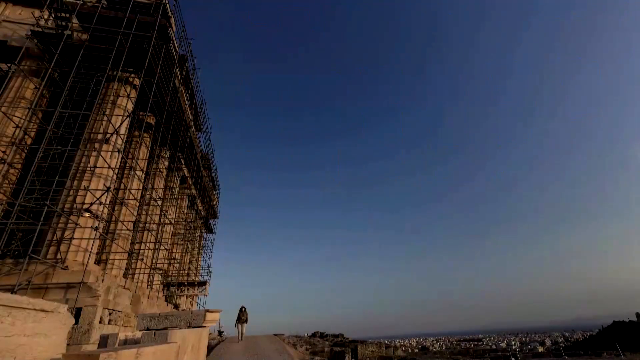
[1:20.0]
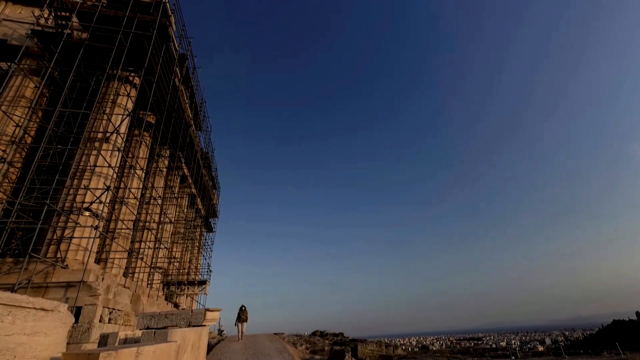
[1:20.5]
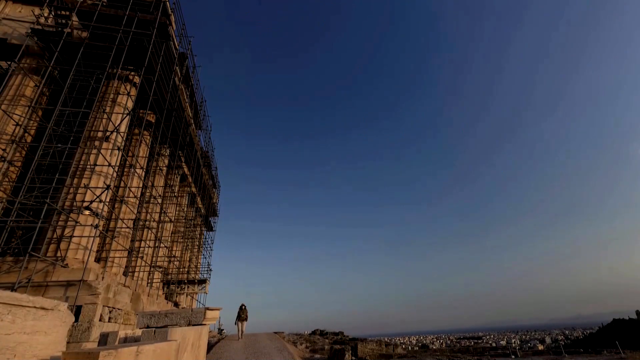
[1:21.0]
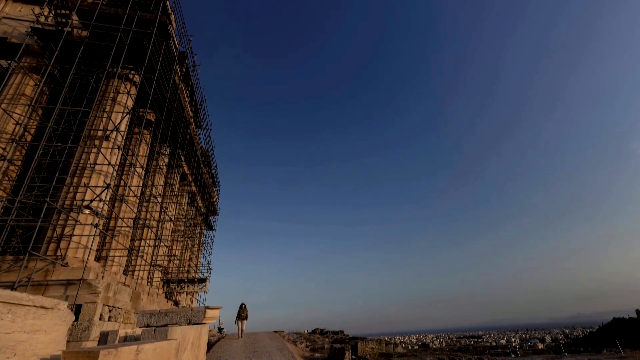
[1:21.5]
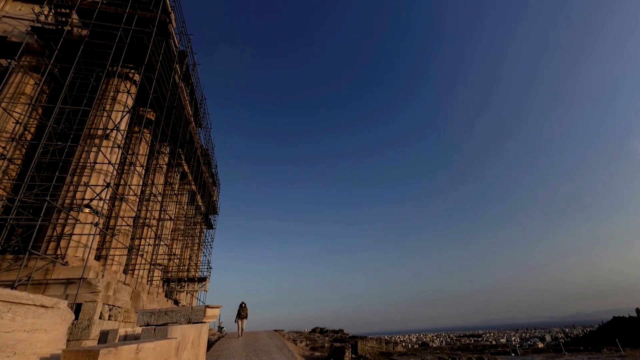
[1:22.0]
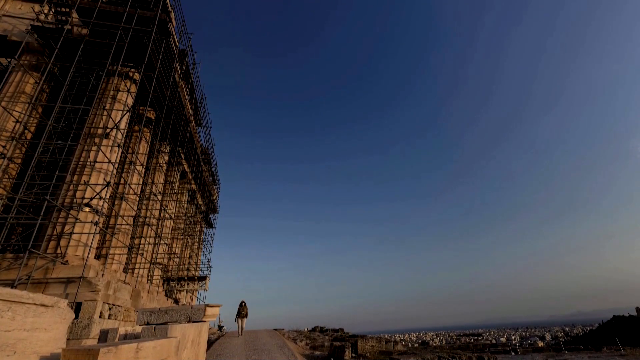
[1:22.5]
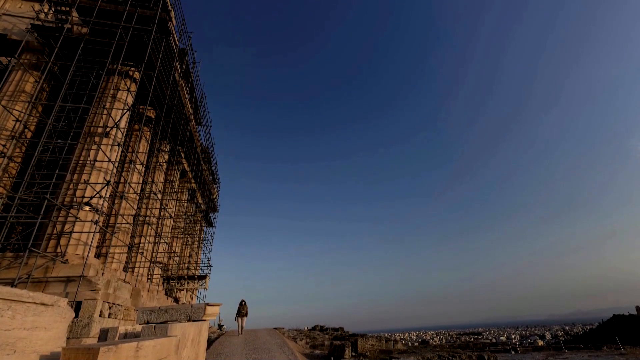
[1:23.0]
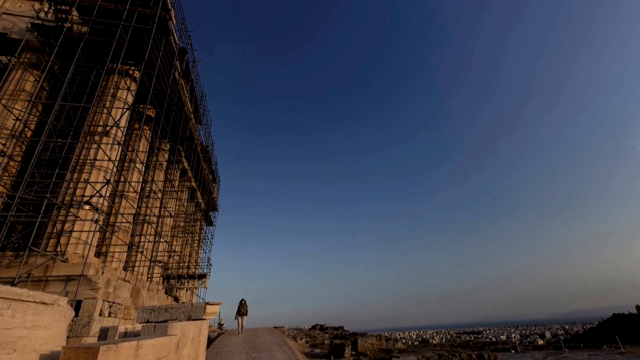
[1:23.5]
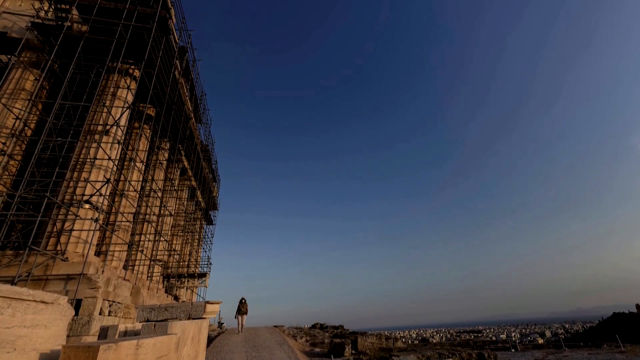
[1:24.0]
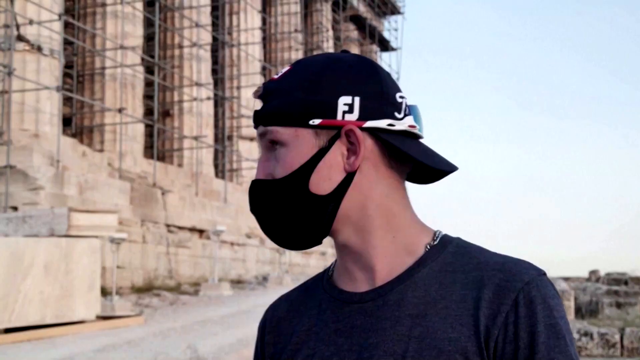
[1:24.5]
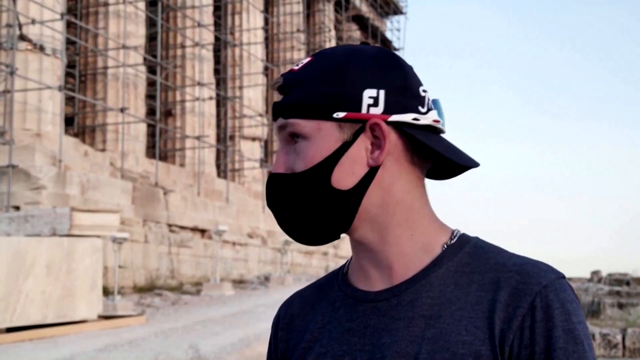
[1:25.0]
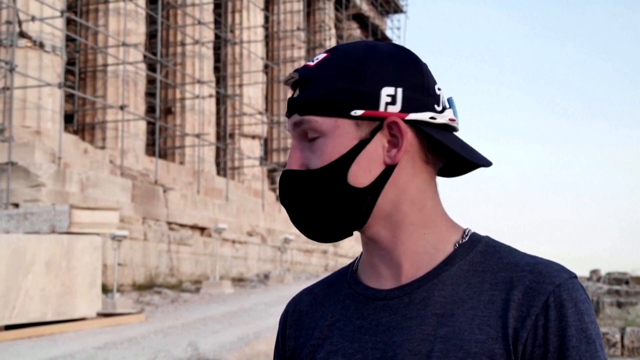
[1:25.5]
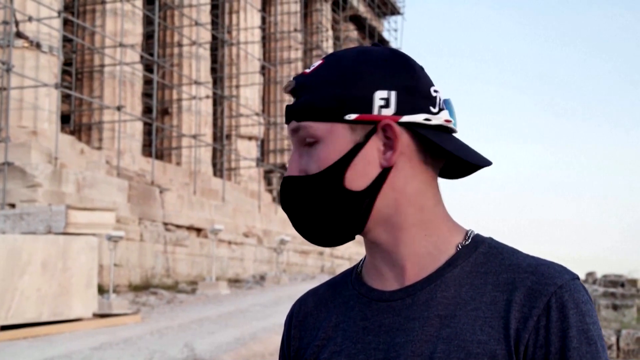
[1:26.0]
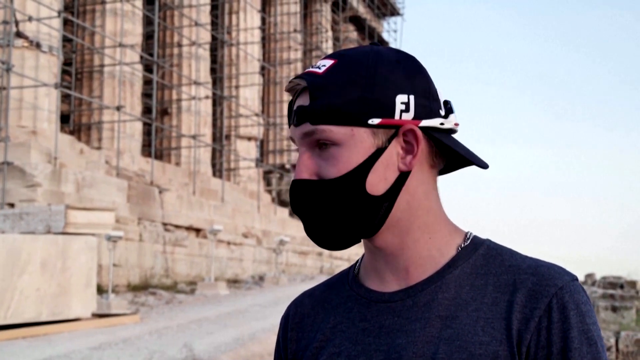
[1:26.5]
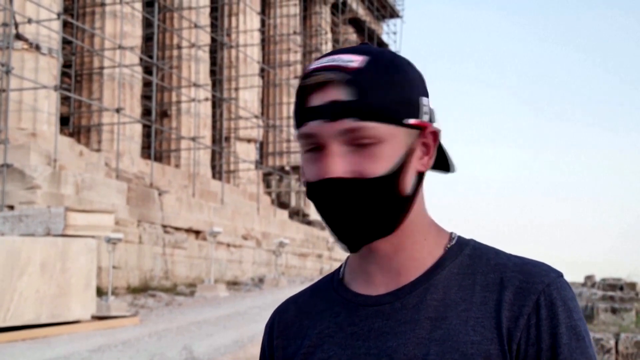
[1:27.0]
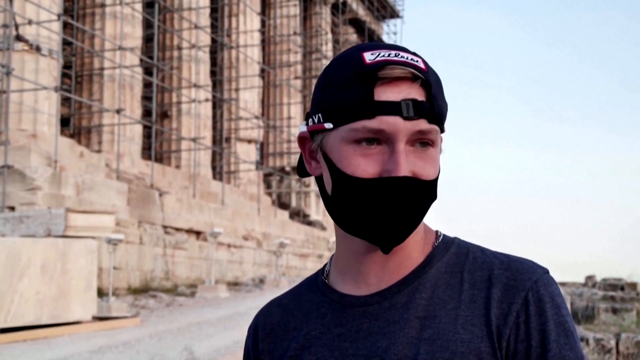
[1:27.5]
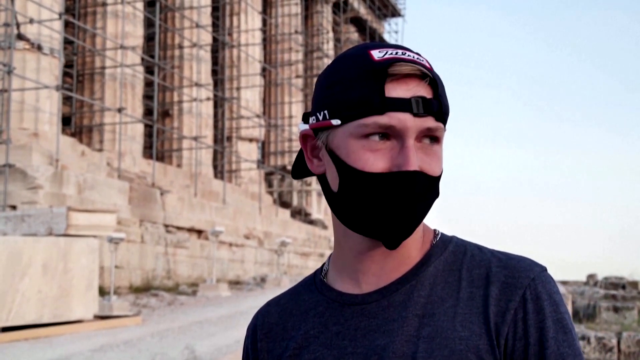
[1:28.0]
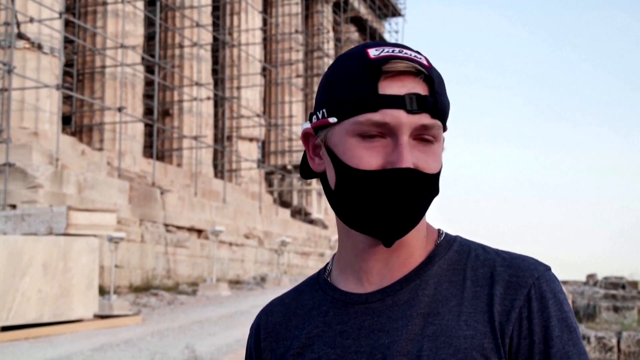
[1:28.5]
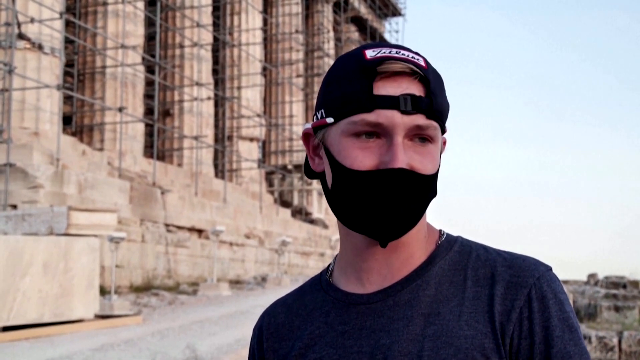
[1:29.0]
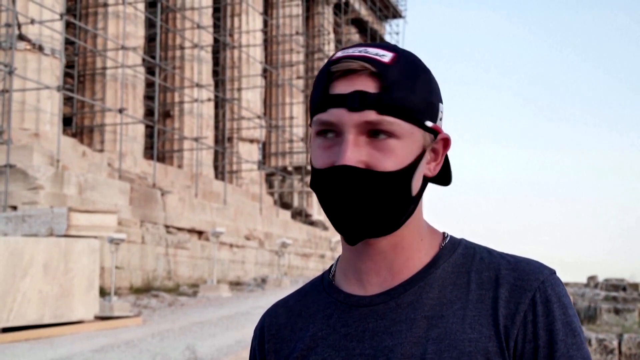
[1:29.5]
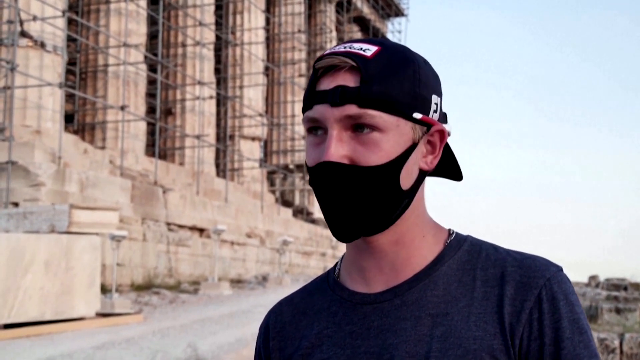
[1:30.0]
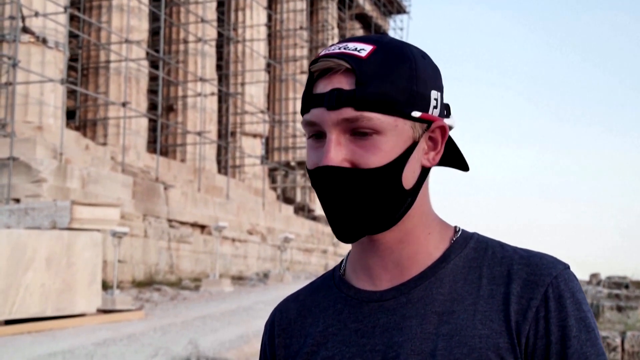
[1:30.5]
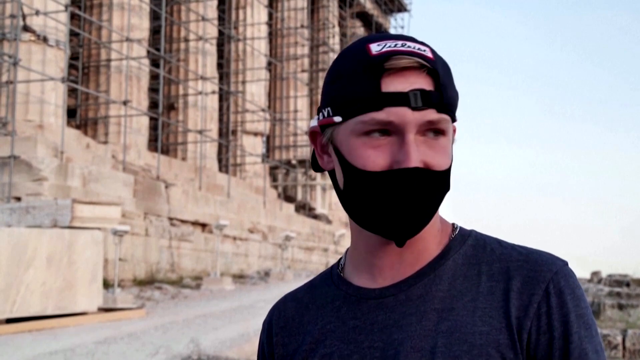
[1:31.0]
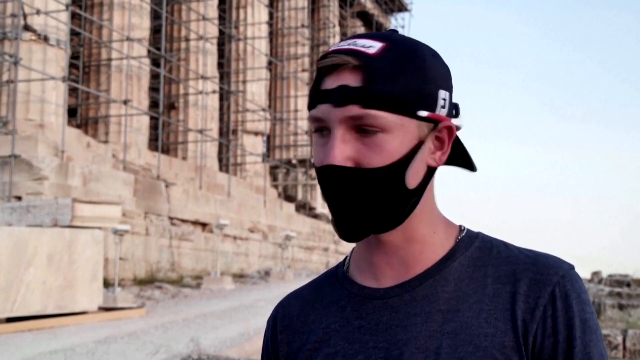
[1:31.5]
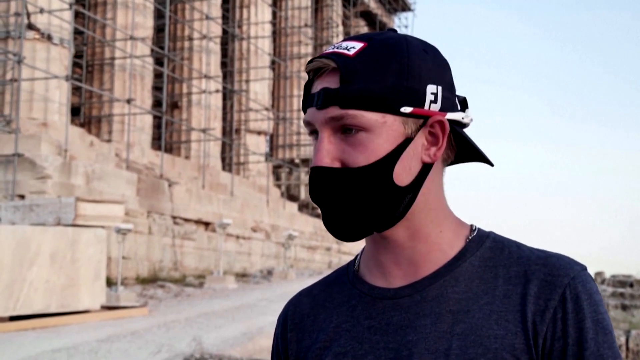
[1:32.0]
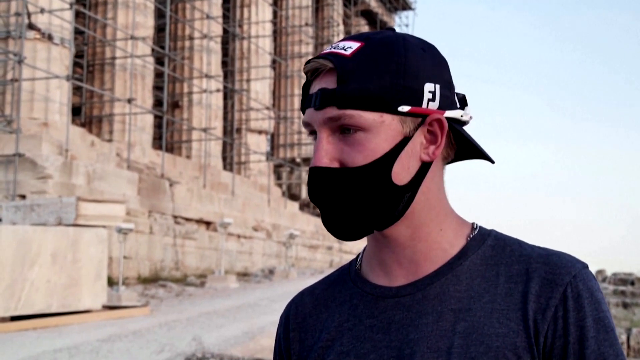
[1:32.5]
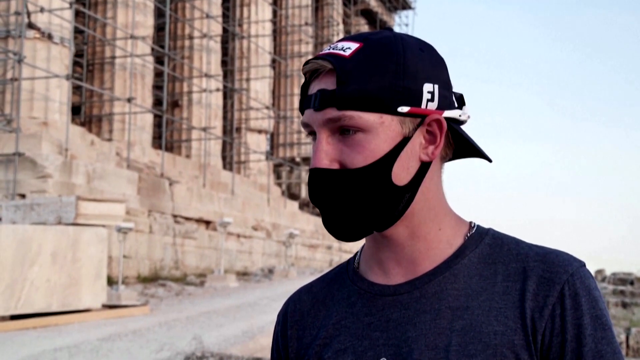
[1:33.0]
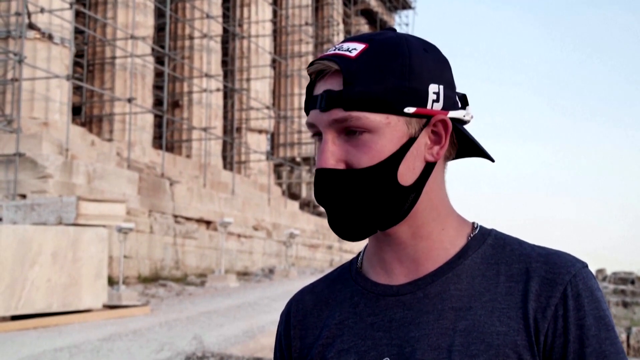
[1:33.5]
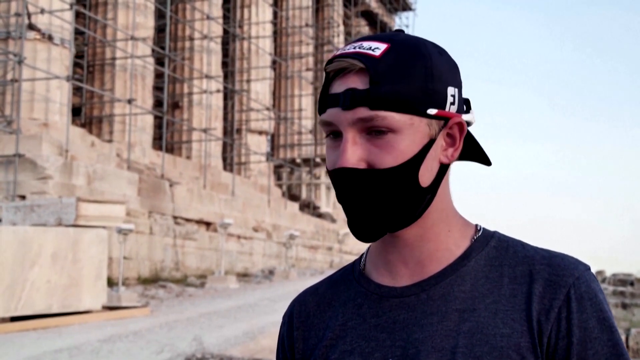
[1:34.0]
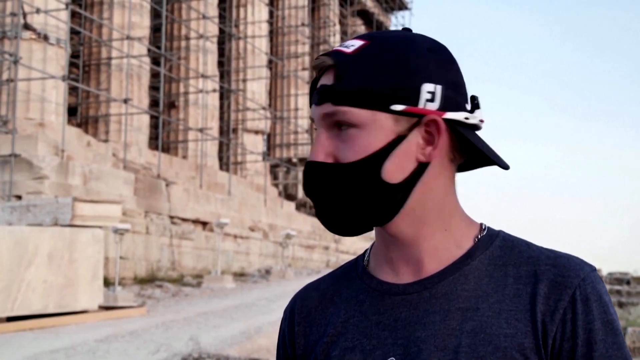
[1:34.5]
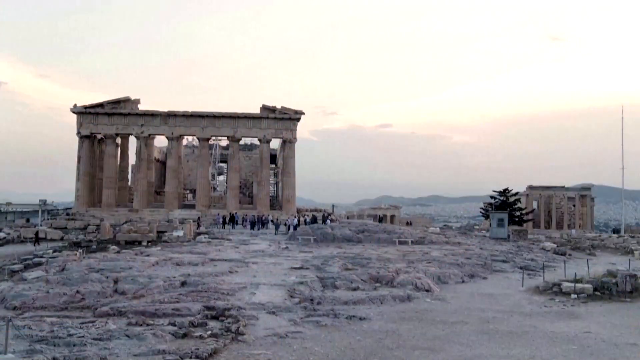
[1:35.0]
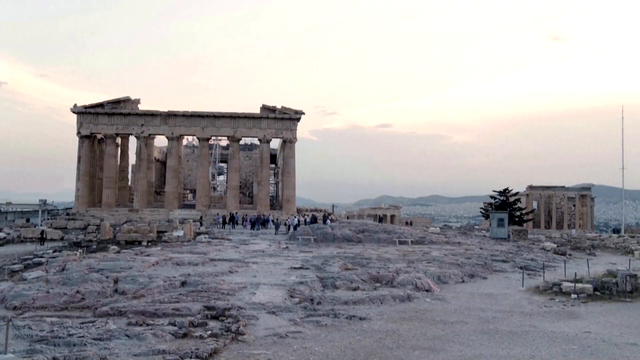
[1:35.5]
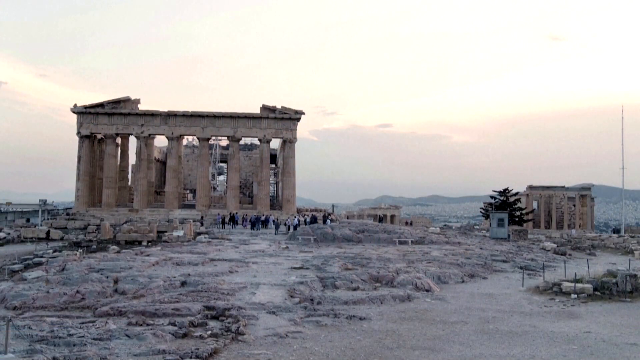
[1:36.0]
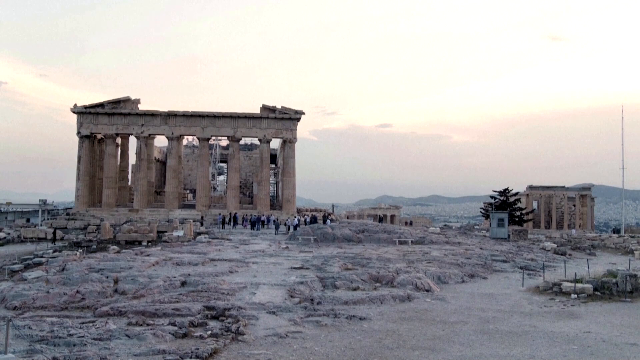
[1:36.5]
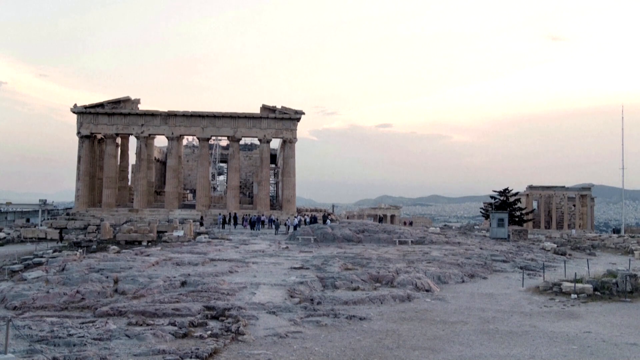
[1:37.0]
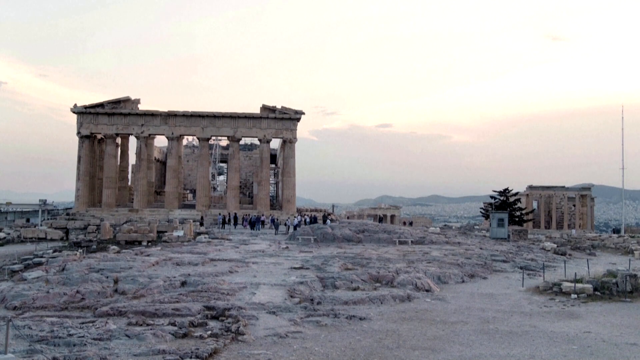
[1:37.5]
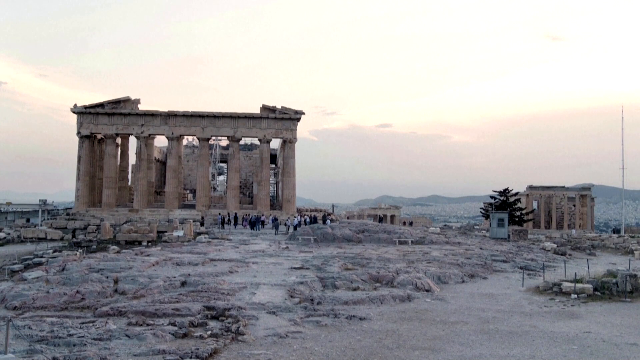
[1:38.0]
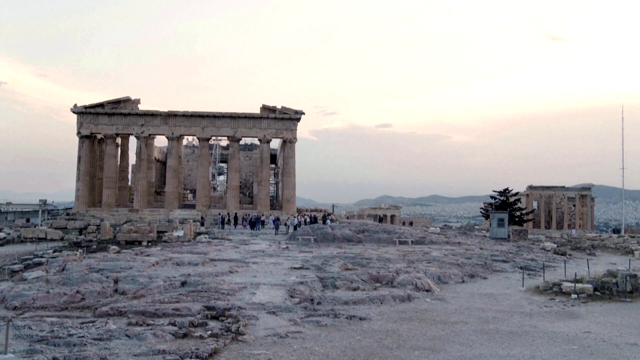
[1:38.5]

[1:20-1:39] The day appears to be slowly fading toward evening, possibly right before sunset. More shots show the building that has been the focus throughout. Then a single man appears: a Caucasian male who looks pretty young, somewhere between 18 and his mid-20s. He wears a black protective face mask over his mouth, a backwards cap with sunglasses on the back of it, and a dark-colored t-shirt. Whoever is filming videotapes him as he talks, though with the mask covering his mouth it is hard to tell how much his mouth is moving, so it is unclear whether he is talking about the building or is a tourist being interviewed about it. He is possibly a college student of one of the four to five older people dressed in business casual.